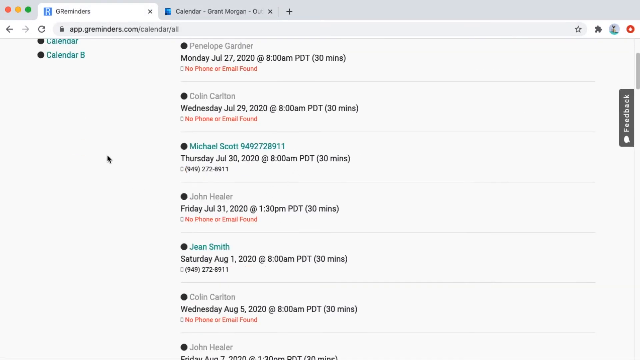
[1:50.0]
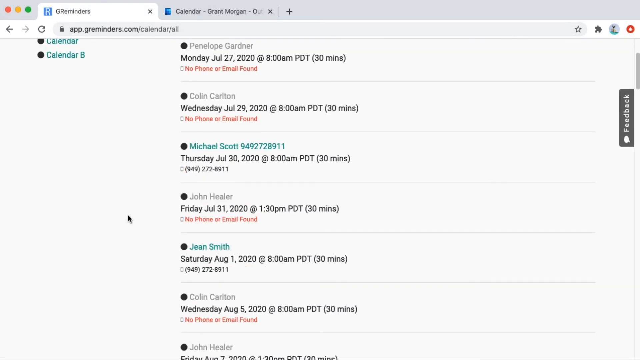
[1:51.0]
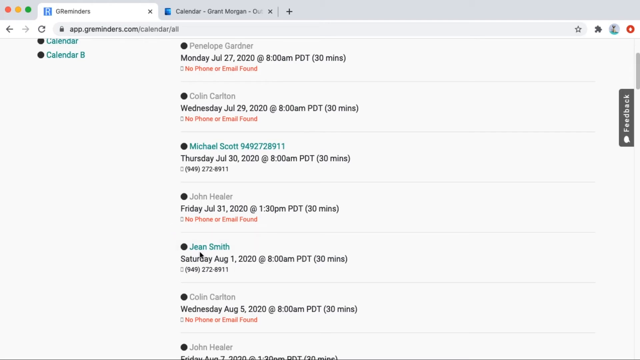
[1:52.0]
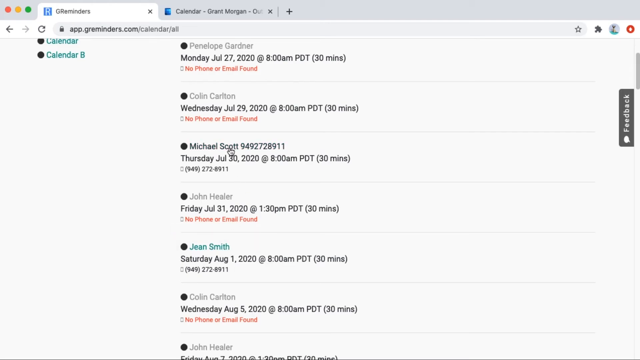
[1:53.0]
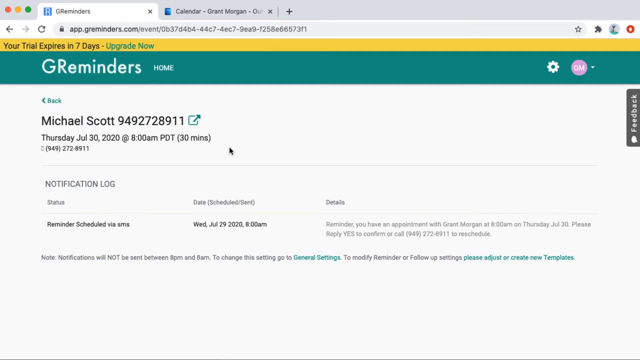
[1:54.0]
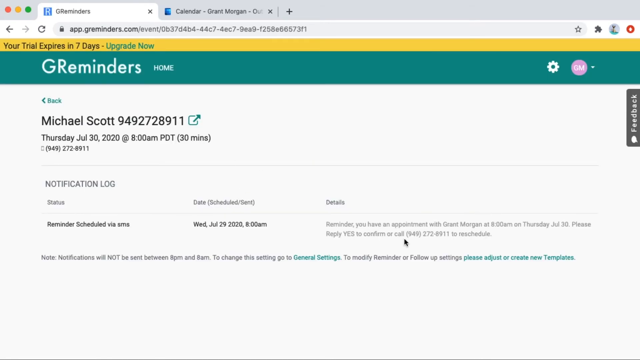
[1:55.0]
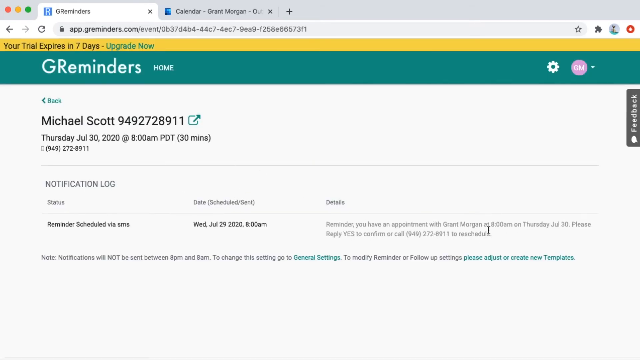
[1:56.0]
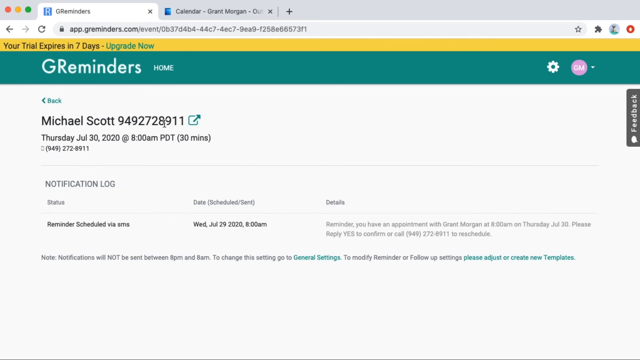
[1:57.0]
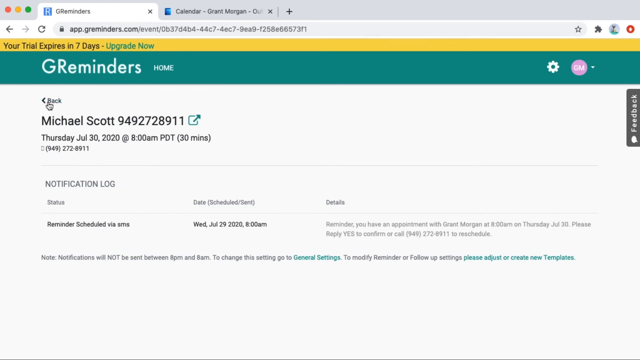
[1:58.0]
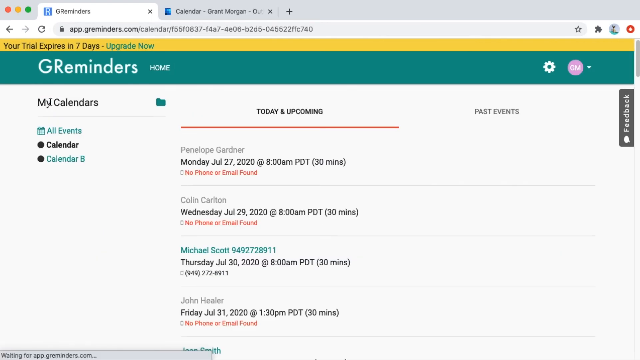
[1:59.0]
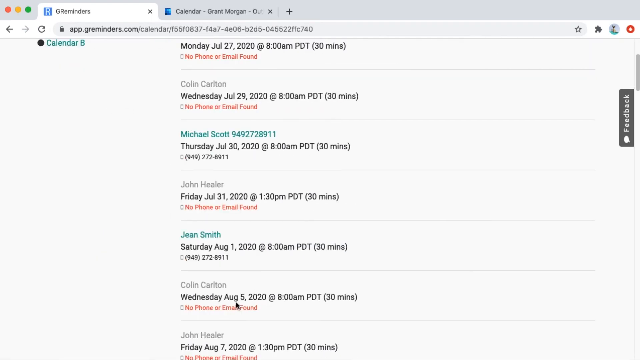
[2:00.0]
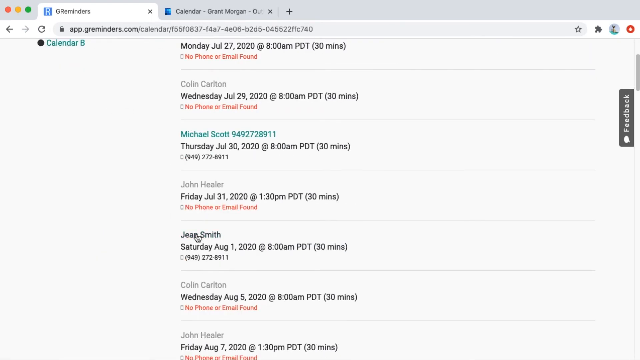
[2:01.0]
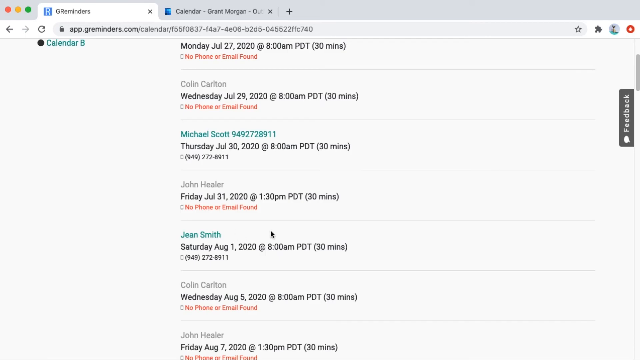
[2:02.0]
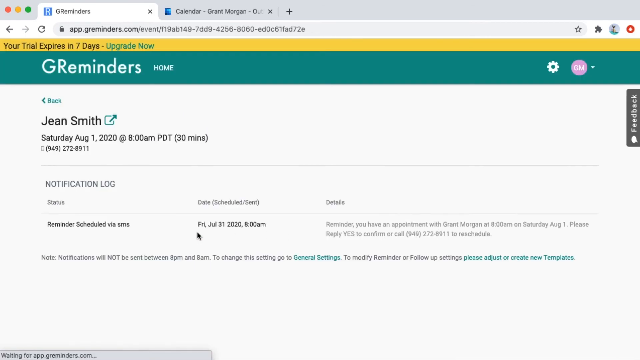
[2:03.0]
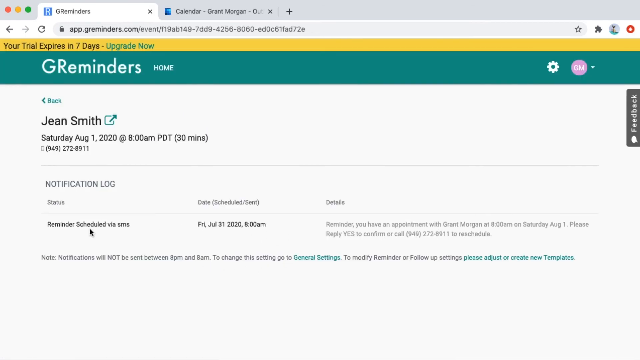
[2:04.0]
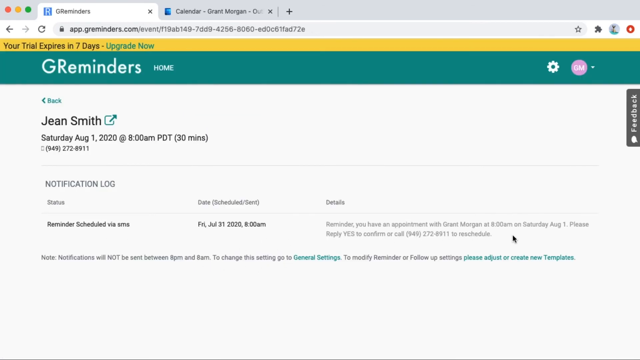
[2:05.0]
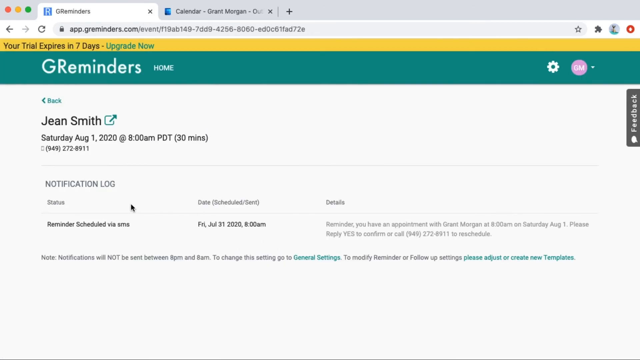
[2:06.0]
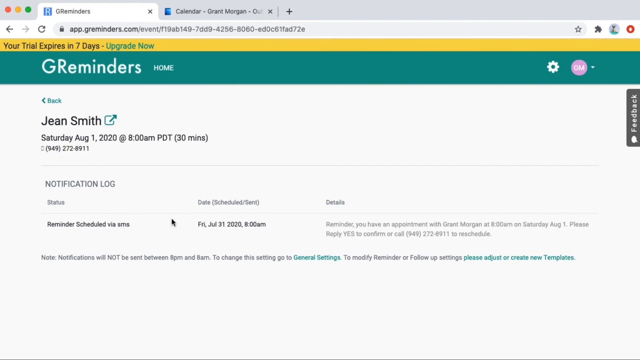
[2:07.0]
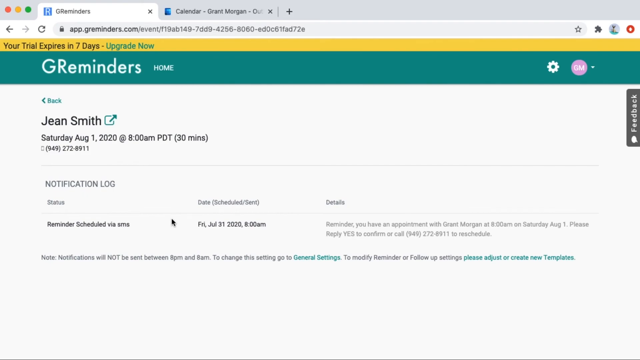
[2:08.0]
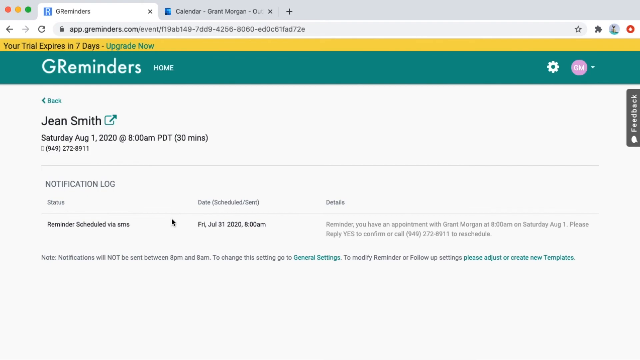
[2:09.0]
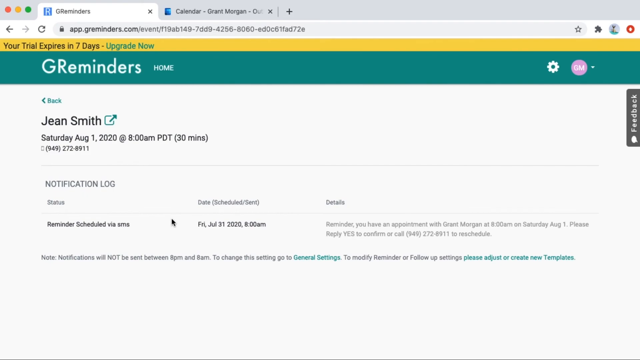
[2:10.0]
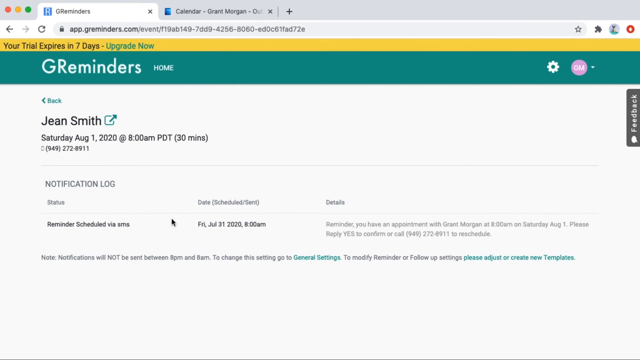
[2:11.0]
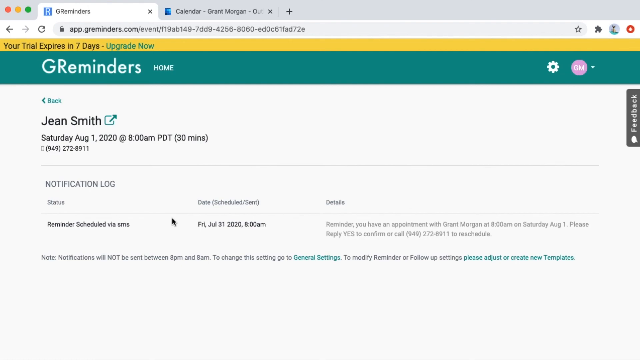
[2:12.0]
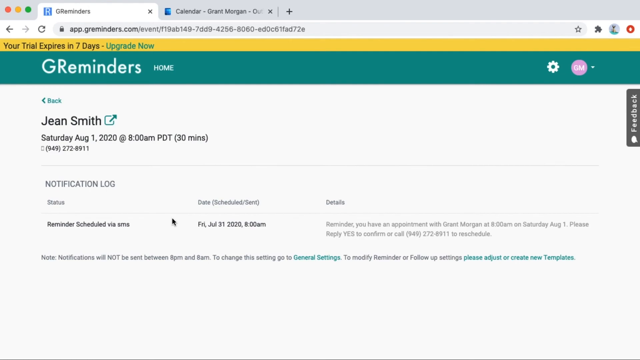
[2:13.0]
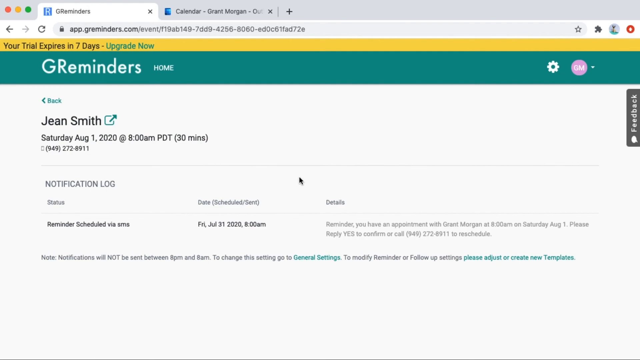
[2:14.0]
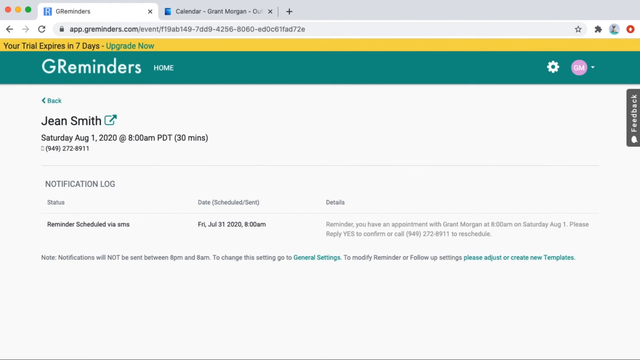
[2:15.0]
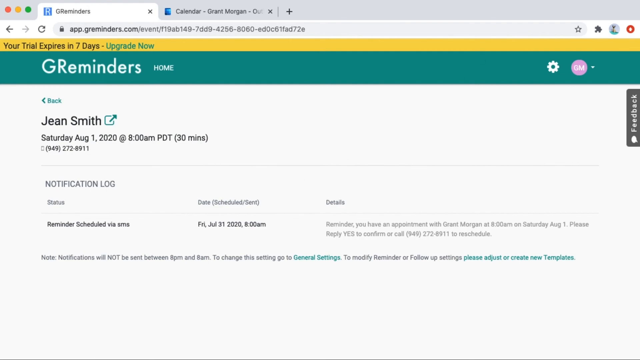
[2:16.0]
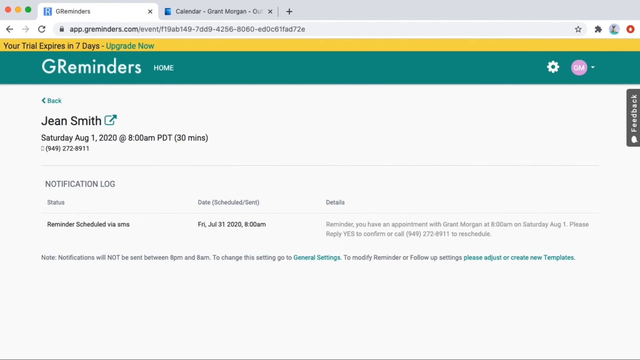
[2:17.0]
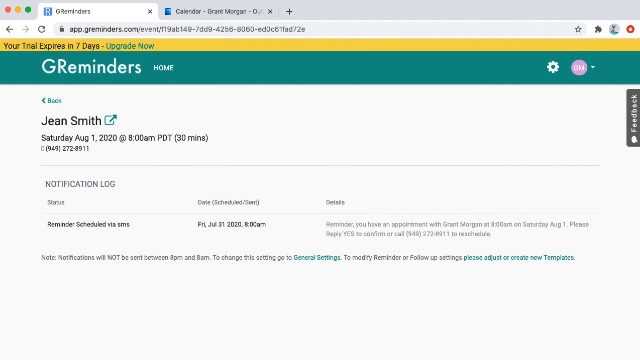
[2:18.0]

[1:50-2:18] The G reminder site lists upcoming schedules with Michael Scott and John Smith. Michael Scott's entry has a number in the name, while John Smith's has the number only in the description under the date of the meeting. The man first opens the Michael Scott meeting, whose details show a text reminder: "you have an appointment with Grant Morgan and 8am on Thursday. Please reply yes to confirm." The John Smith meeting shows the same information, with a reminder via SMS.